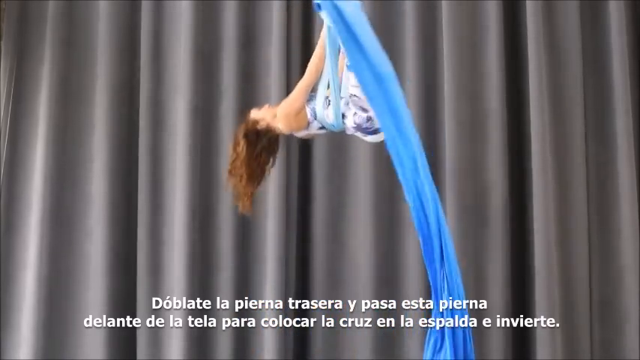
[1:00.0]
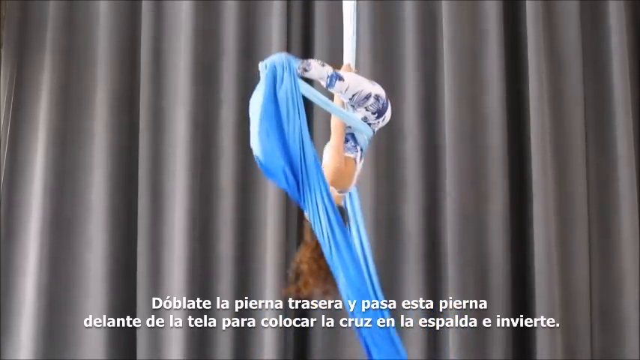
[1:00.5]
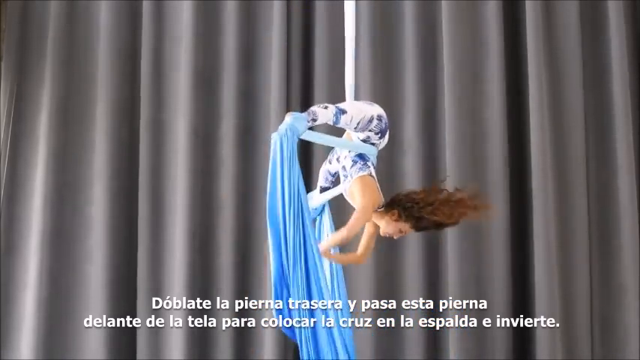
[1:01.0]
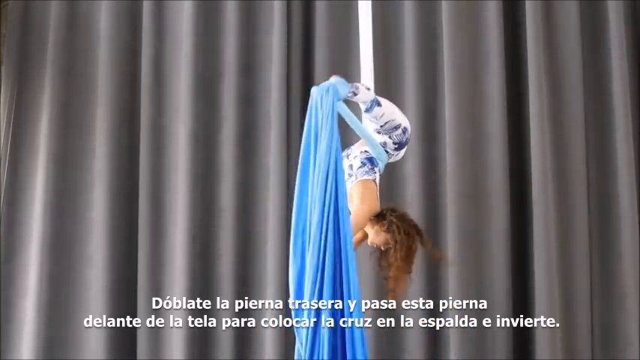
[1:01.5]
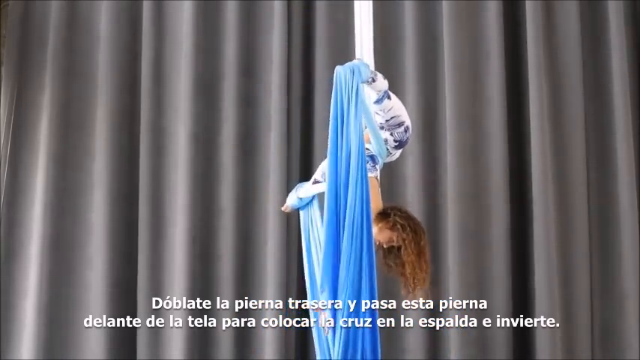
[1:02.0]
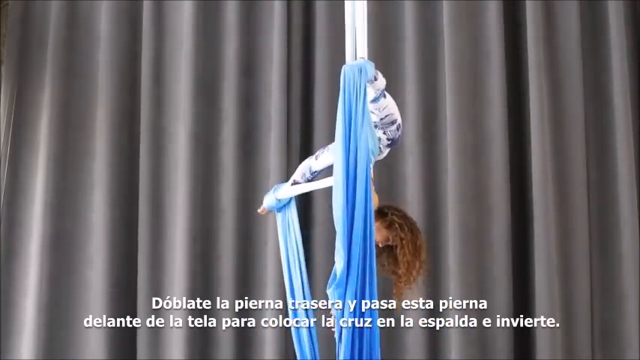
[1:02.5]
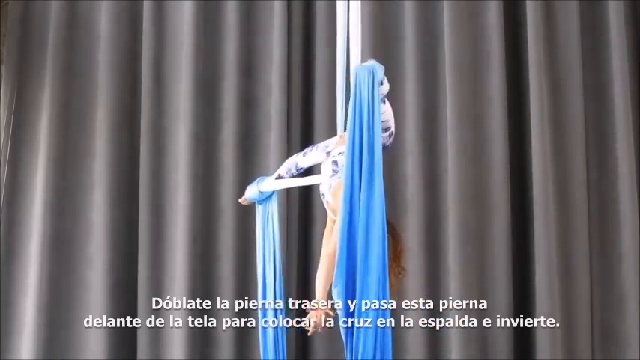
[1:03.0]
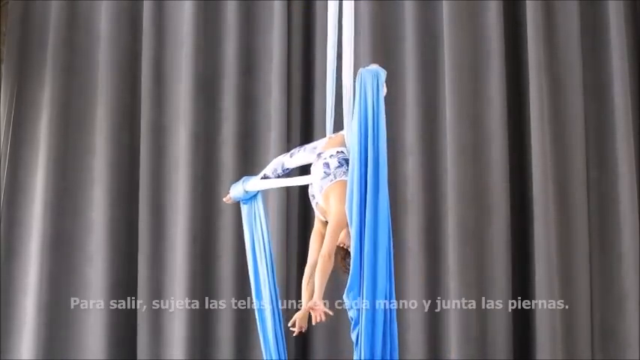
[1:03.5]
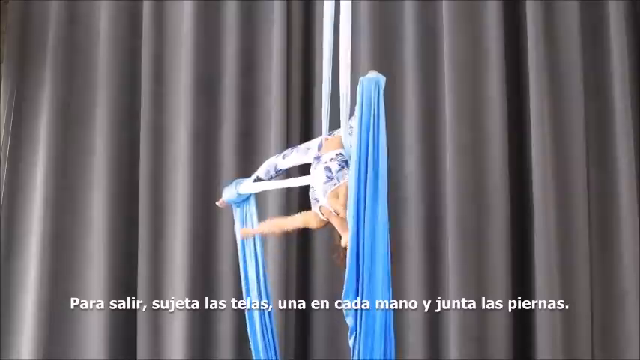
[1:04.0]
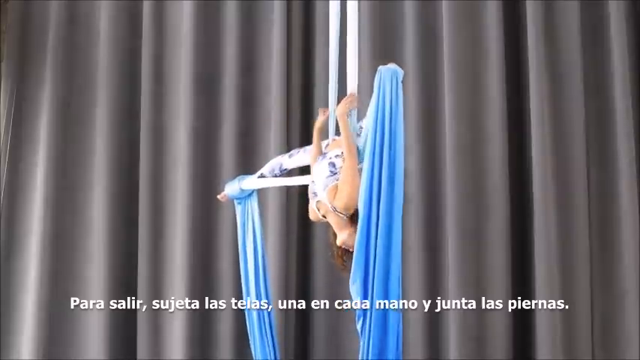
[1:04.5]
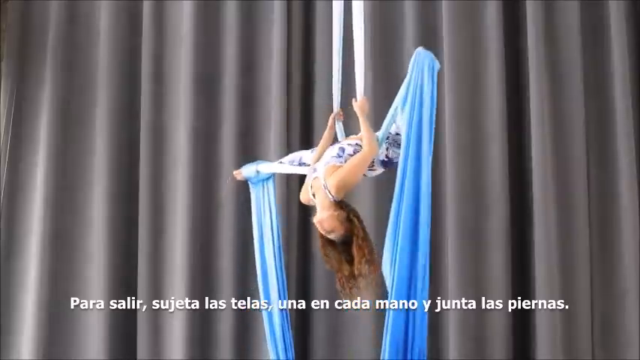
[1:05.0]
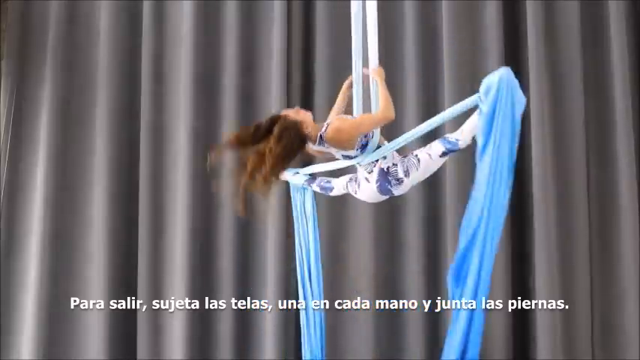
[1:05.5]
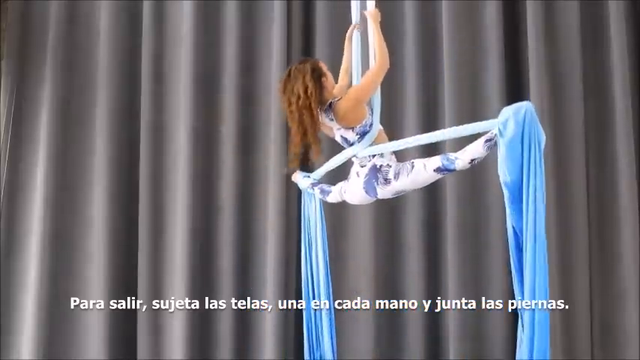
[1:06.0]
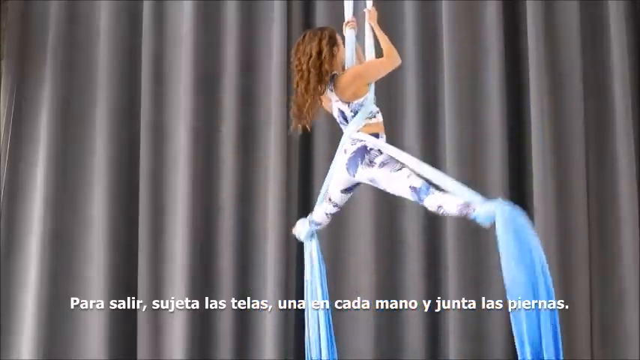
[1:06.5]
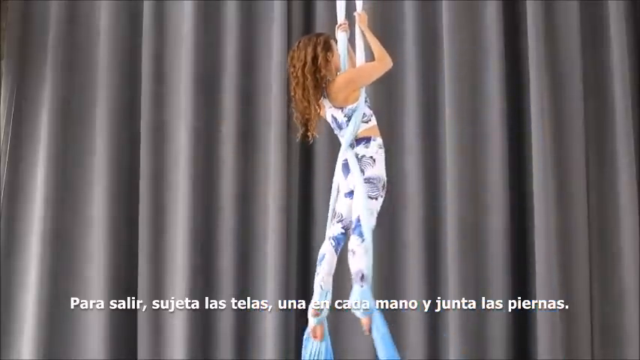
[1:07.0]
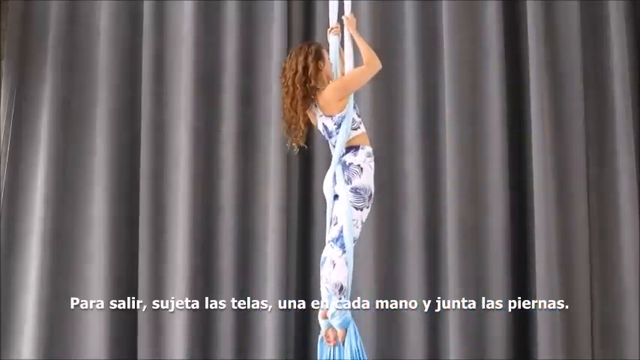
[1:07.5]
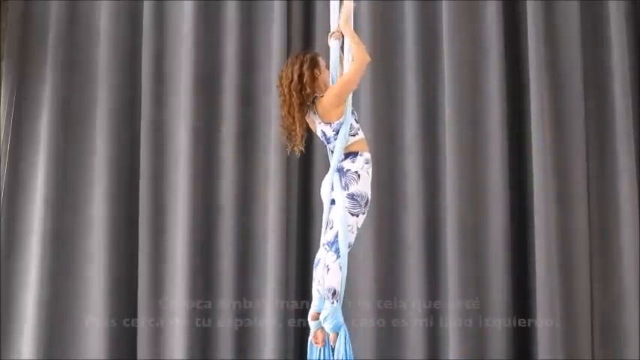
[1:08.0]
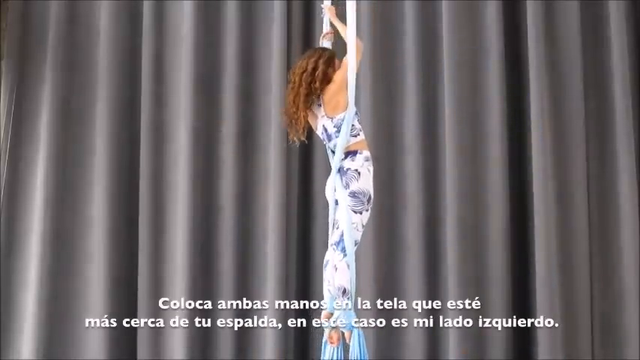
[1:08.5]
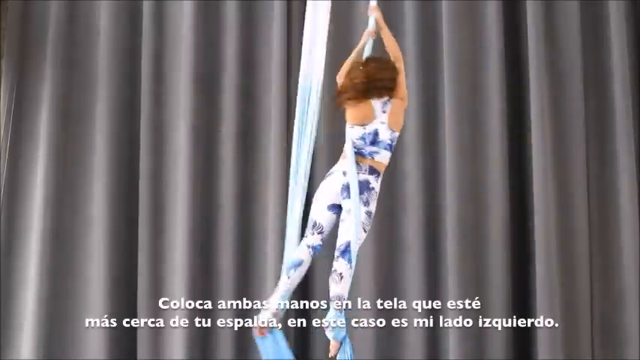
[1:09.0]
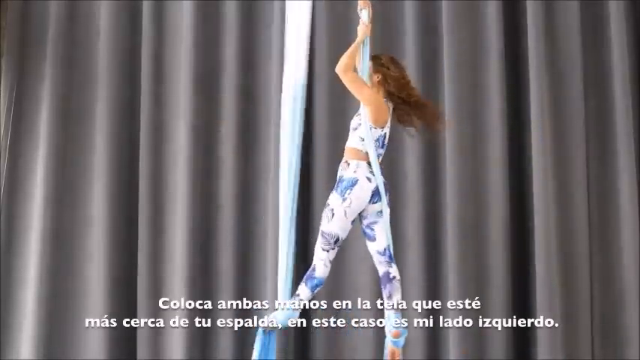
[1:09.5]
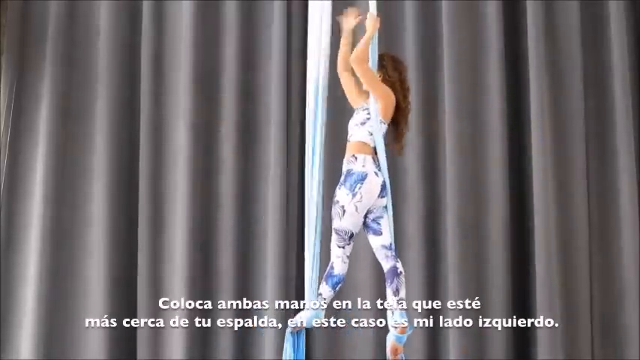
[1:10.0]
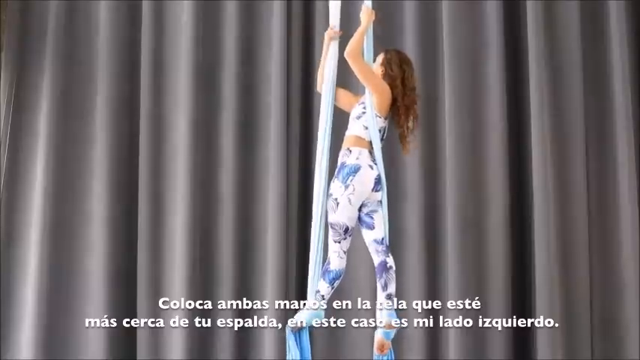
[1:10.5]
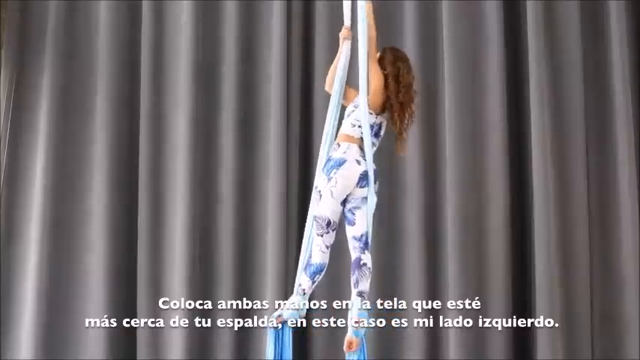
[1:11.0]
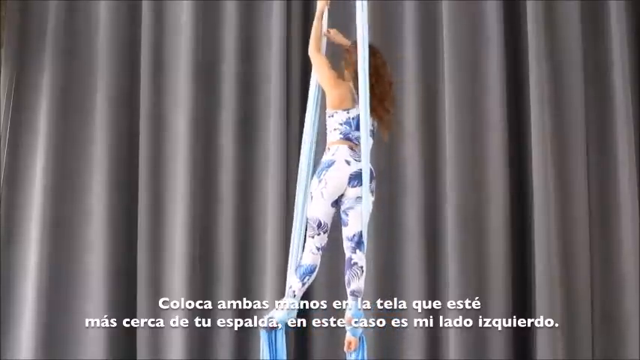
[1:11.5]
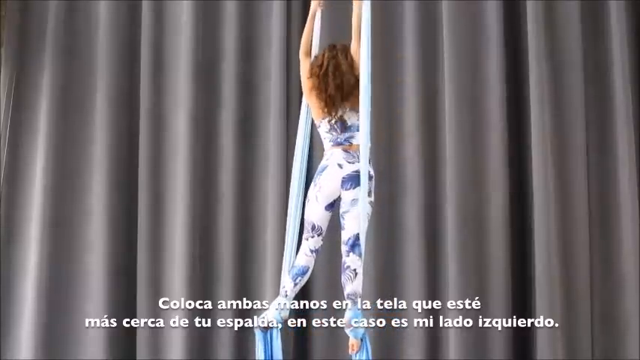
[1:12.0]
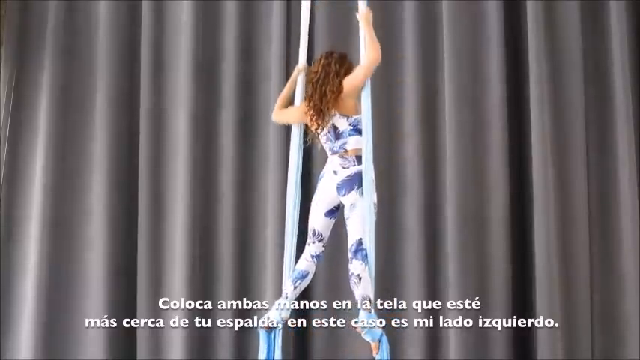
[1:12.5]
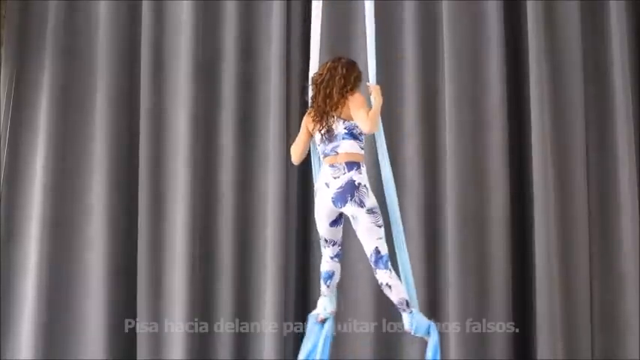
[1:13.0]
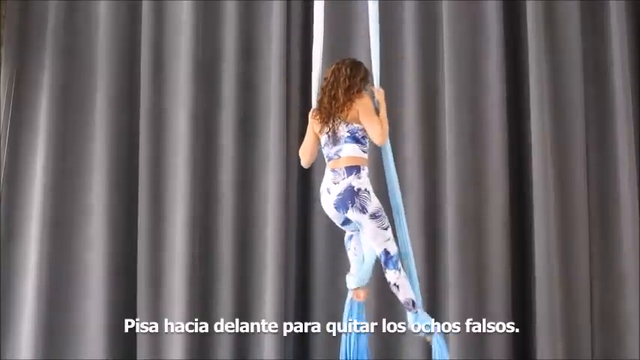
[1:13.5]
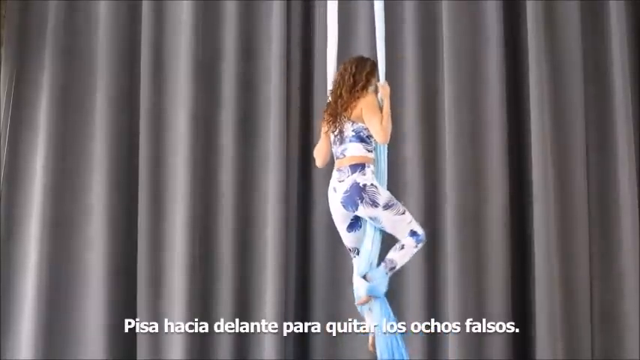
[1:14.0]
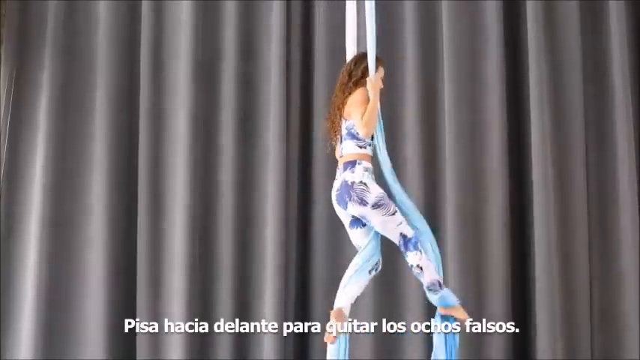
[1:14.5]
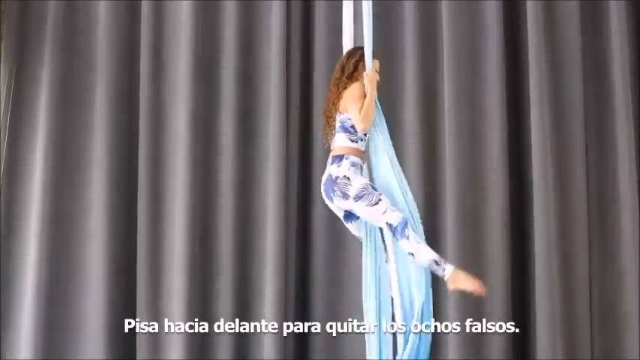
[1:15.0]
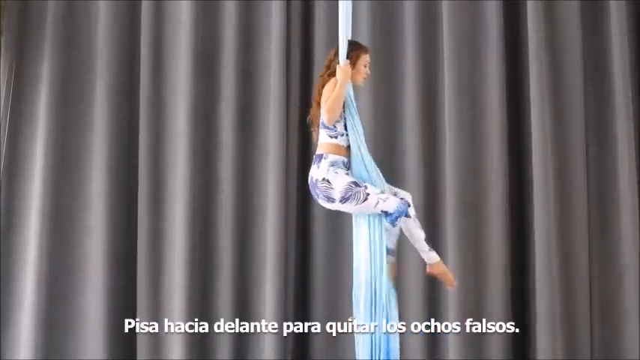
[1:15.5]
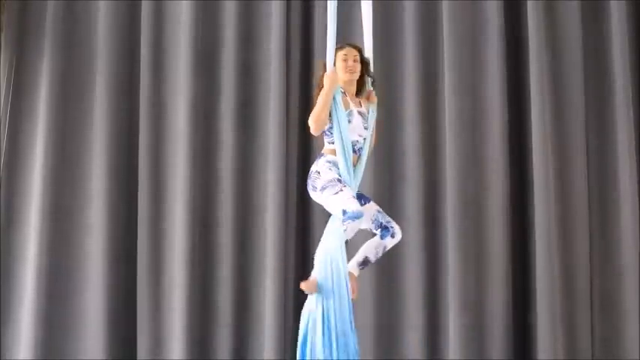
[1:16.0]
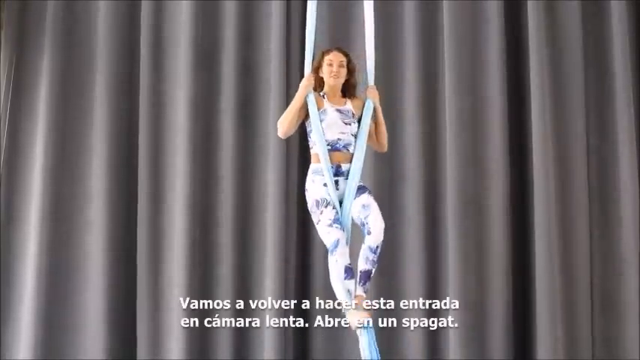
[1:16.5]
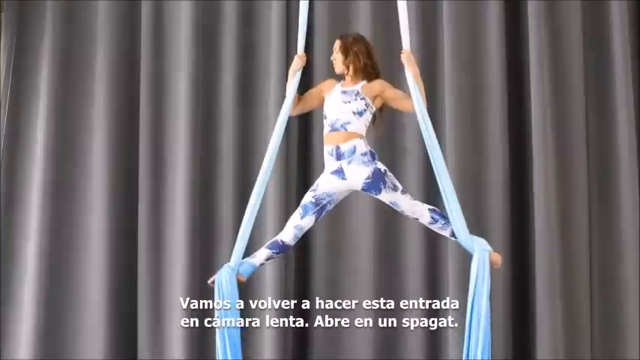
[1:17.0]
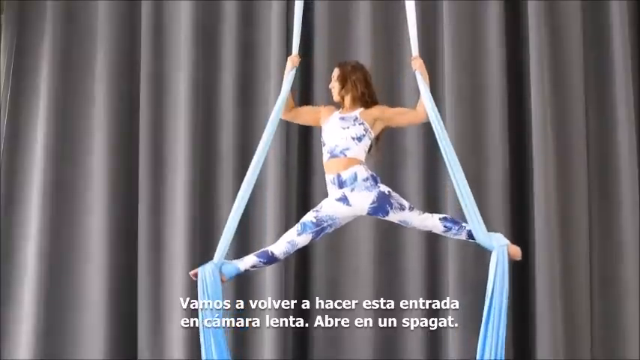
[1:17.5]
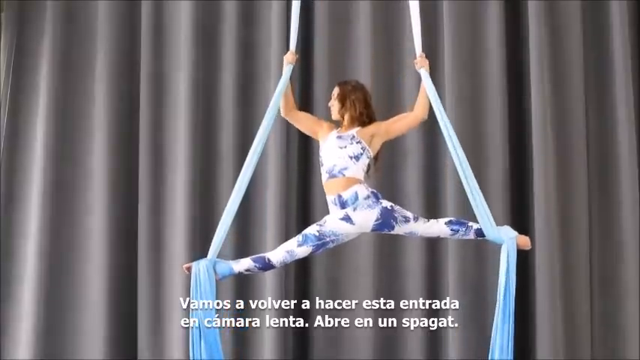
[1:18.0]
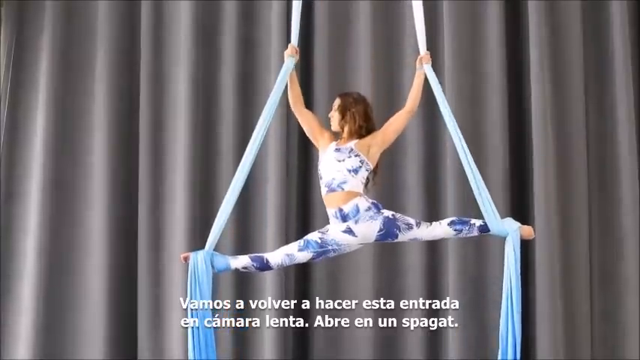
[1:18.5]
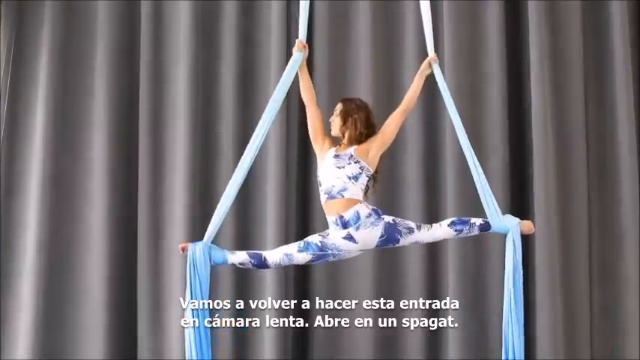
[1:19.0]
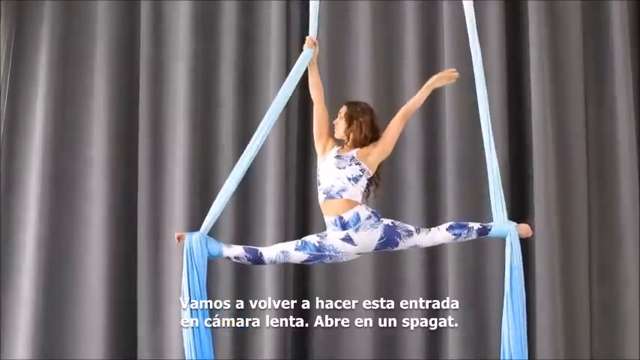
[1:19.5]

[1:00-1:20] A woman performing an aerial dance has flipped upside down. The material wrapped around her untwists as she turns her body. Captions in a non-English language appear at the bottom of the screen. She is upside down for much of this portion, held up by the material, and she kind of winds it up further so it gives more support as she goes around. When she tips backwards, her hair flows out behind her head.